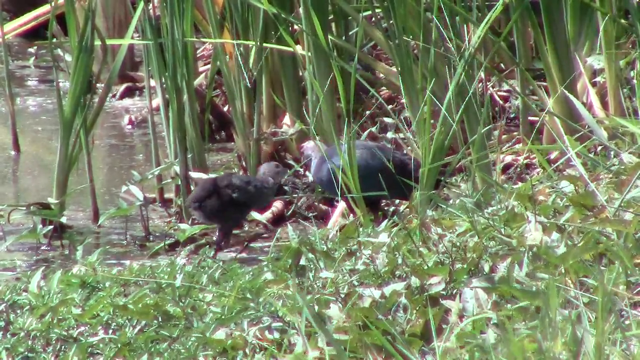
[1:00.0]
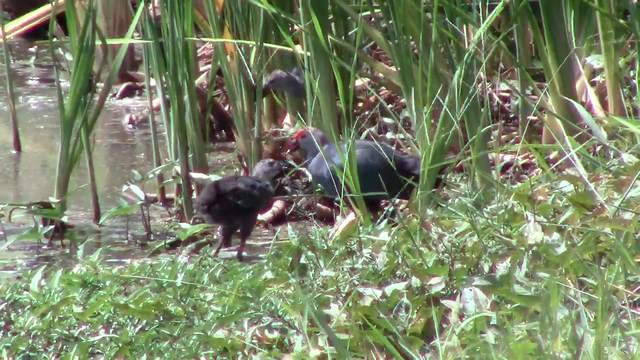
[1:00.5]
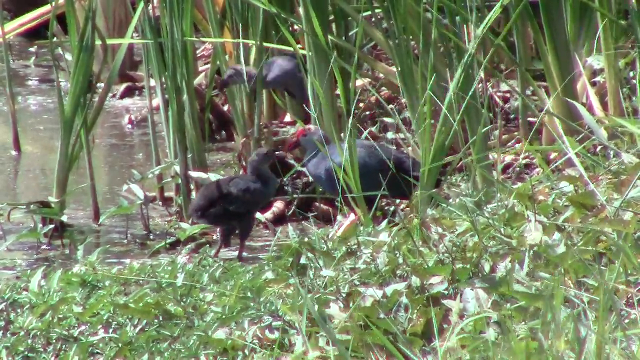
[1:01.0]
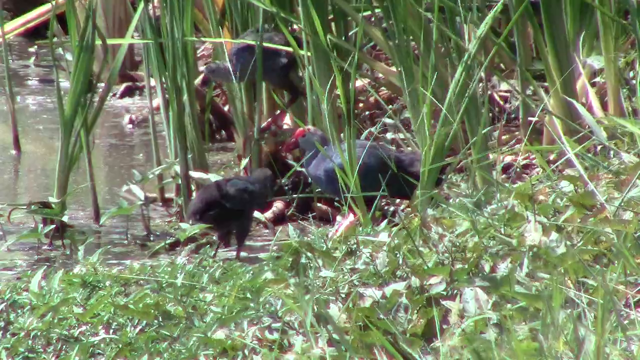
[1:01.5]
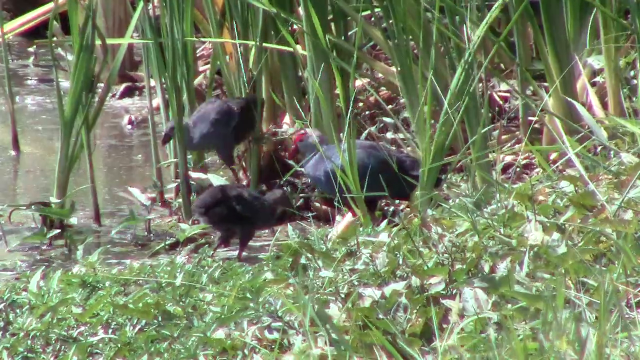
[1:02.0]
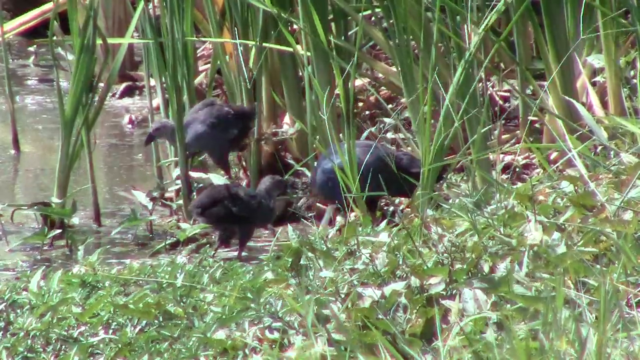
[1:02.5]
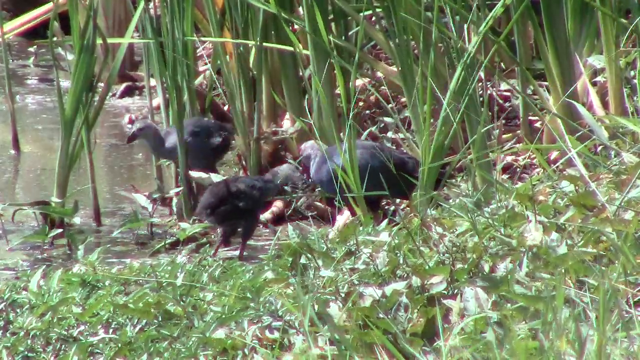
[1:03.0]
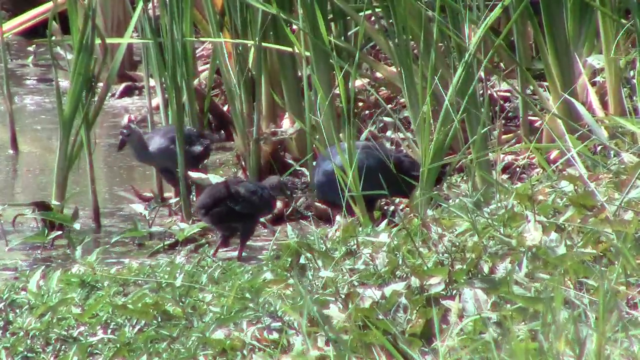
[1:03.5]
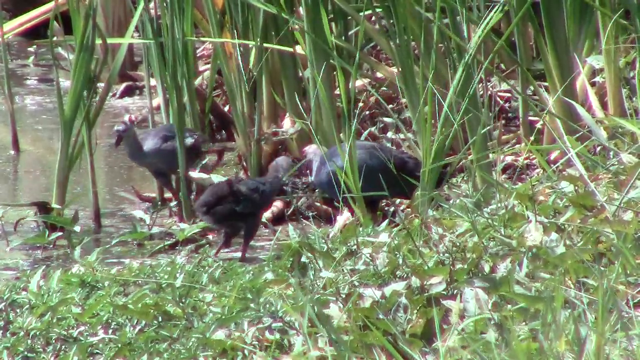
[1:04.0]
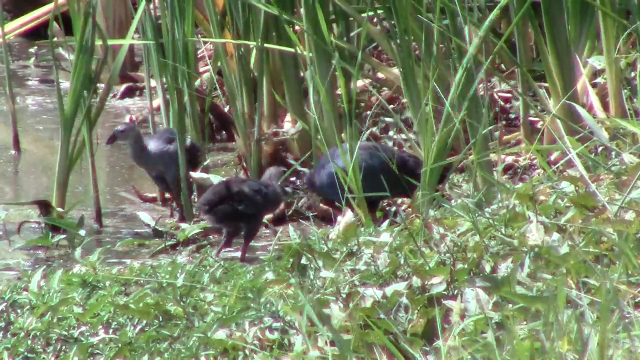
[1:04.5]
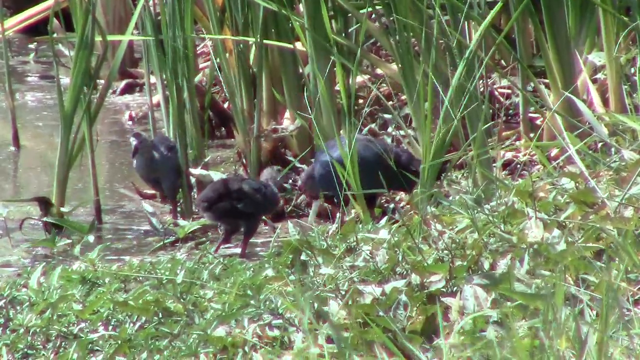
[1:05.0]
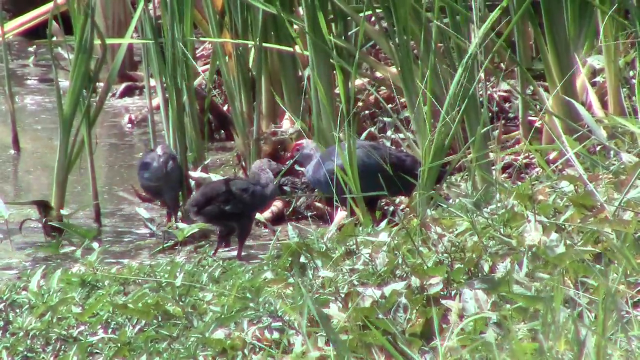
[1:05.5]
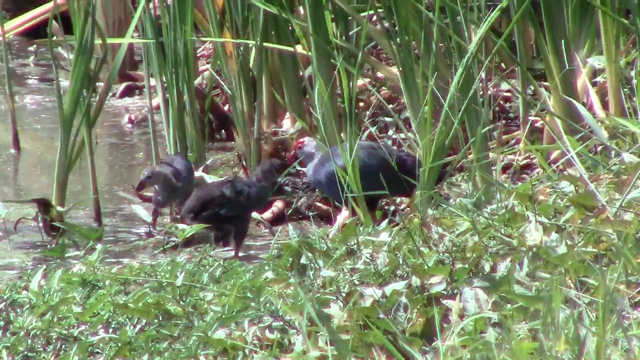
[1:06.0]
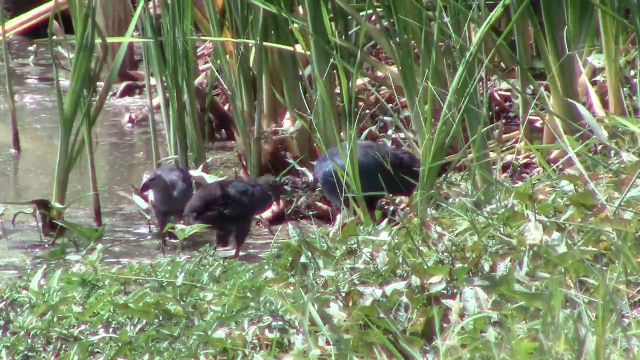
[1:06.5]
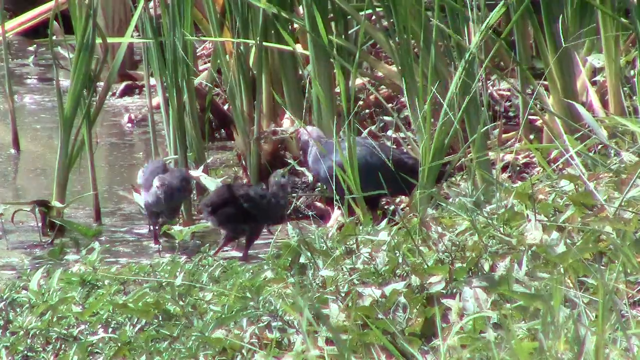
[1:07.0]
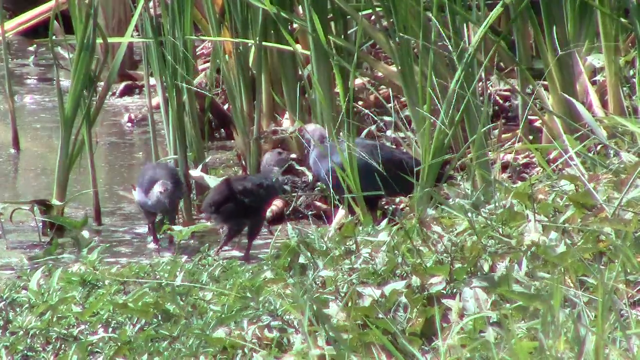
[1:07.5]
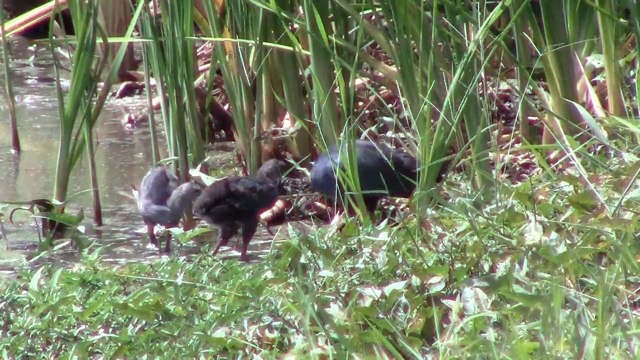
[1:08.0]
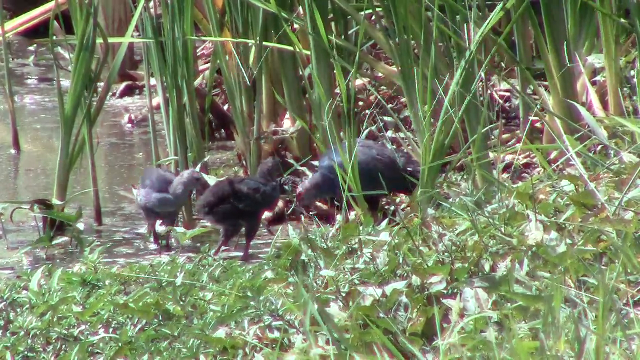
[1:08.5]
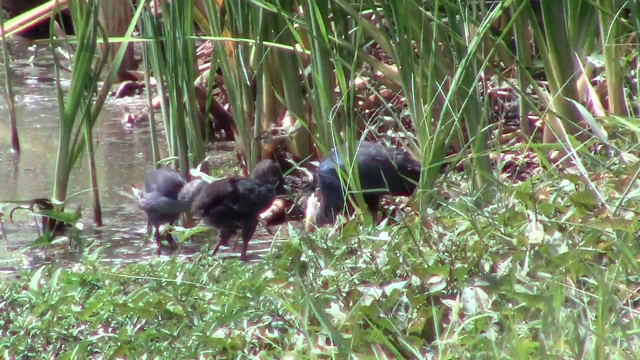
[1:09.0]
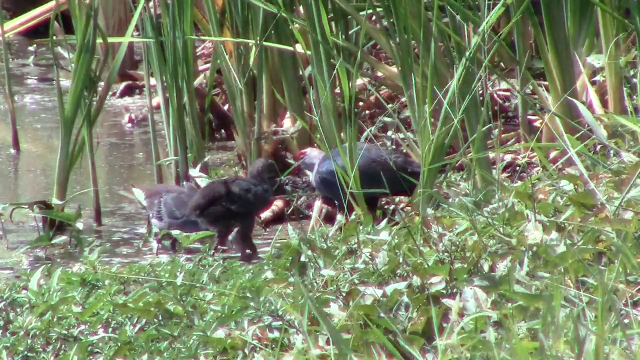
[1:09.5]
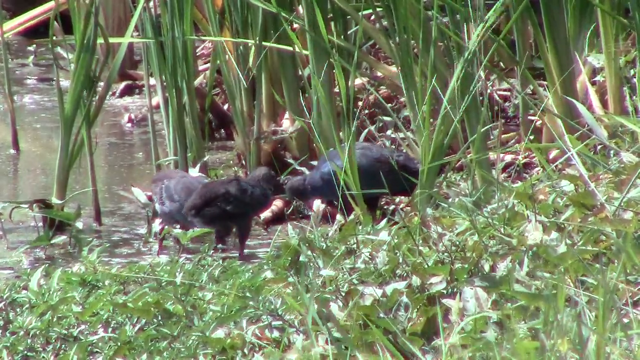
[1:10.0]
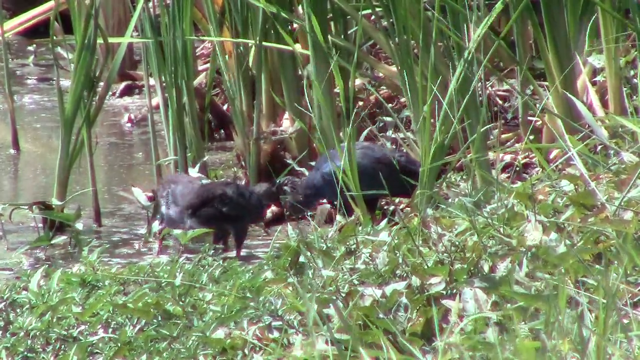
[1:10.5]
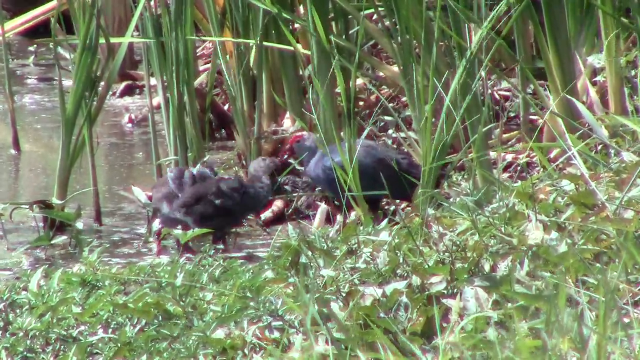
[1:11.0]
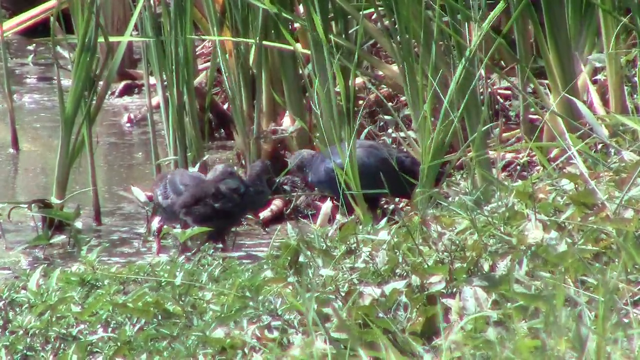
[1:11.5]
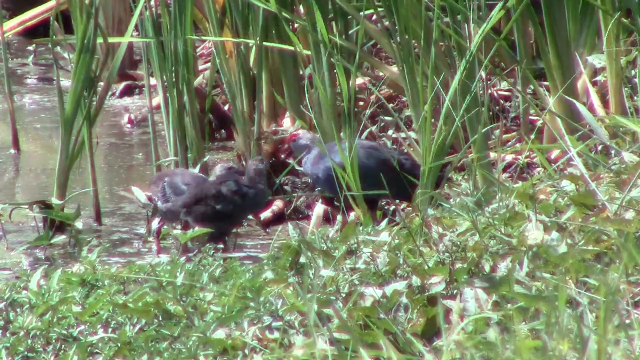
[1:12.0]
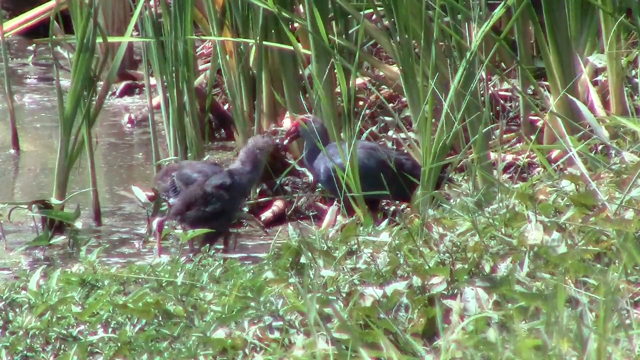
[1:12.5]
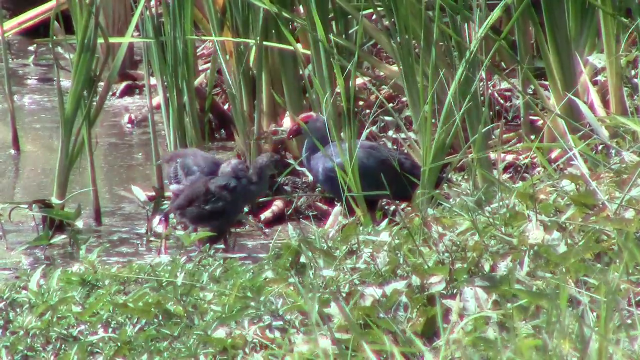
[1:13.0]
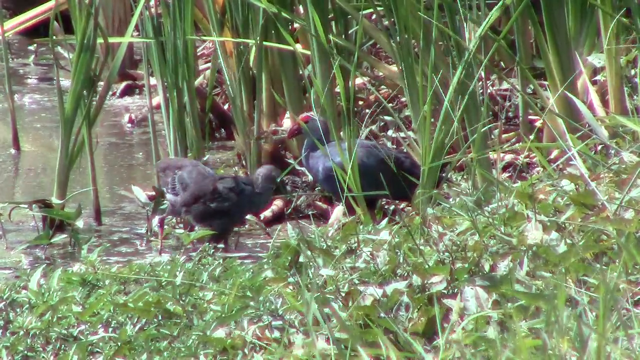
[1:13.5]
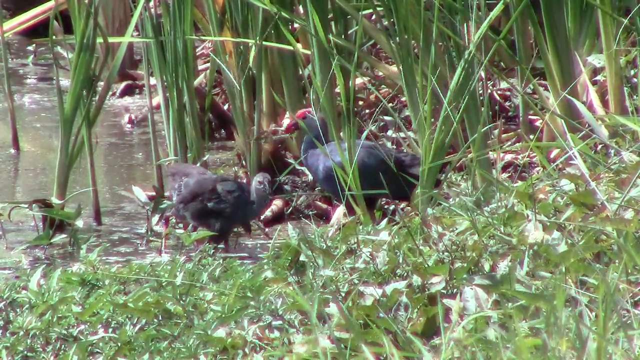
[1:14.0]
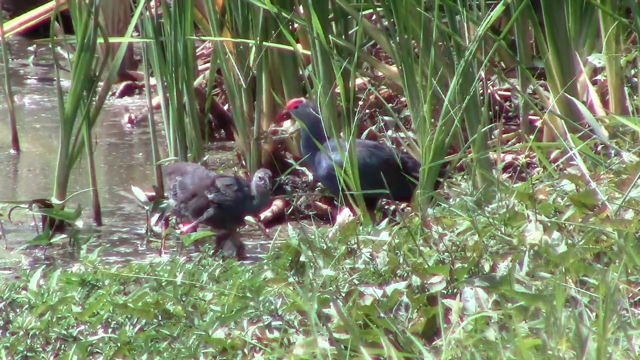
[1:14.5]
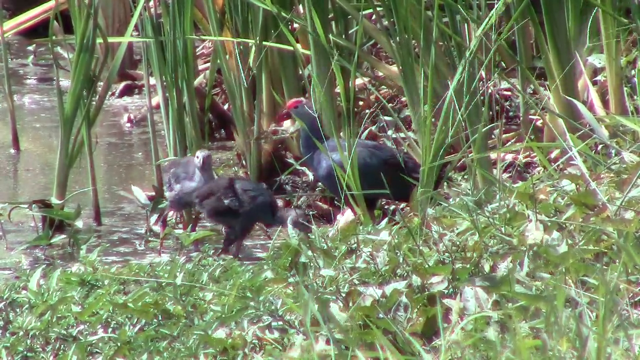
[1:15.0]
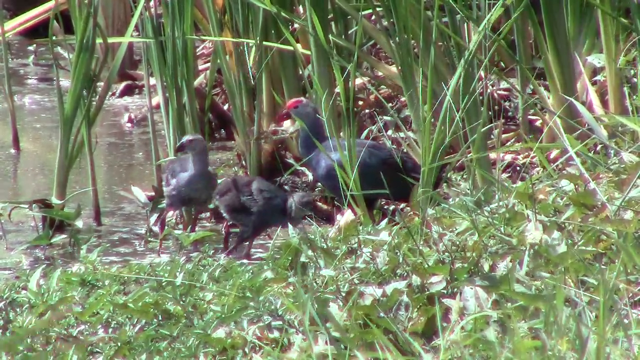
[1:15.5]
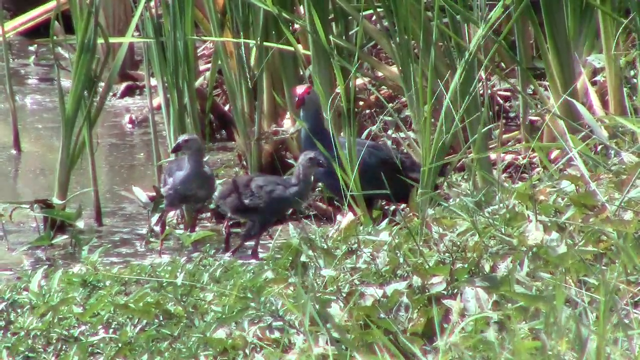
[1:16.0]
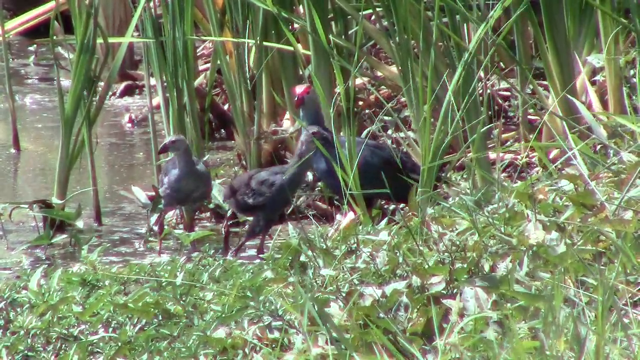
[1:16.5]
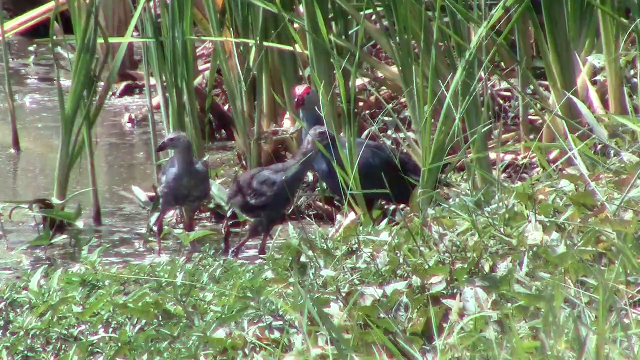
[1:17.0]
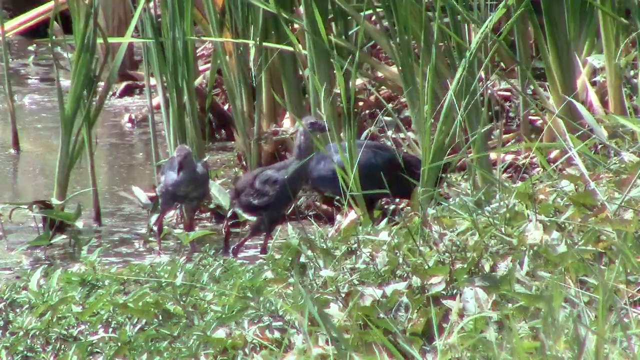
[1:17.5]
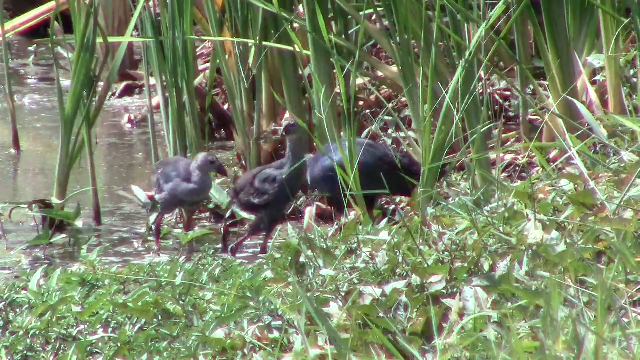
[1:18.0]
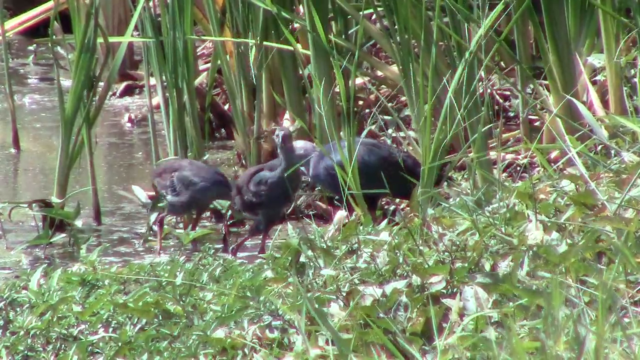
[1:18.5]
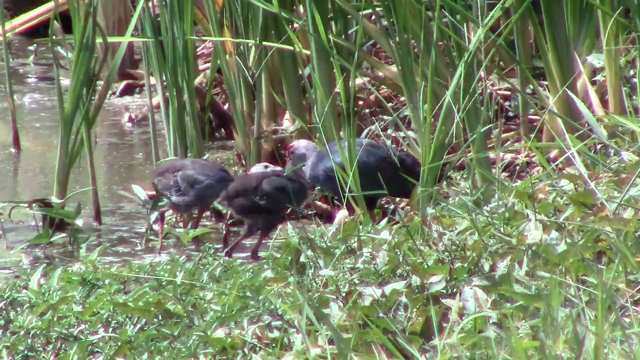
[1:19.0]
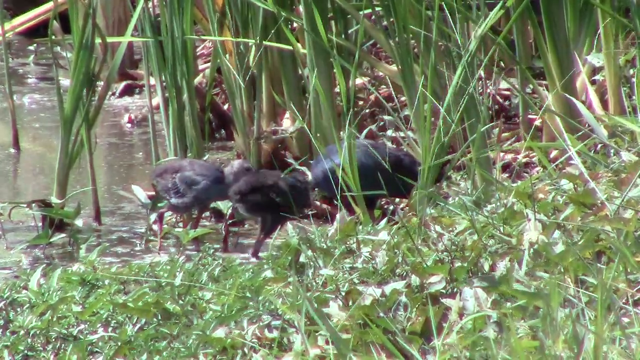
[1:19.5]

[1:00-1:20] The black bird will not leave the other bird alone, and it seems like they are arguing, with the black bird trying to peck at the other bird as if to get the food. Then another bird comes up, which cannot yet be identified.